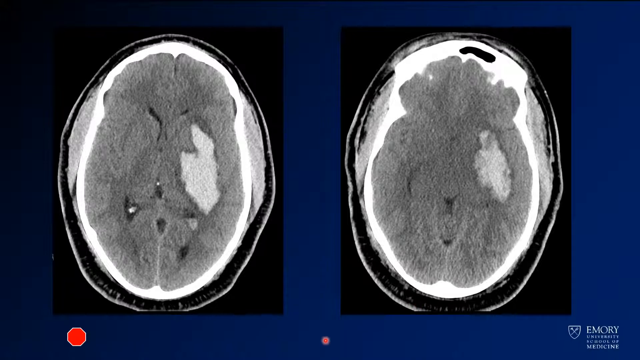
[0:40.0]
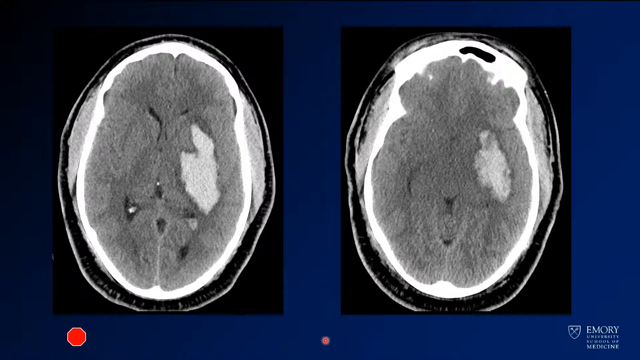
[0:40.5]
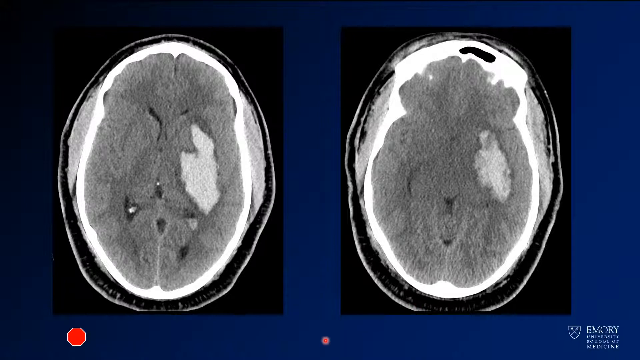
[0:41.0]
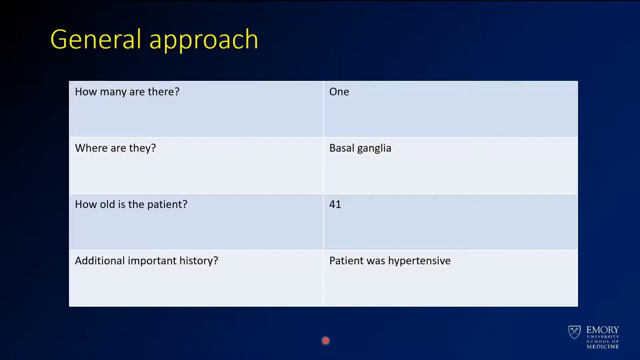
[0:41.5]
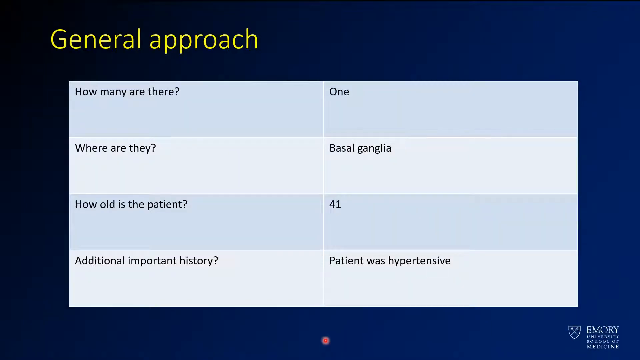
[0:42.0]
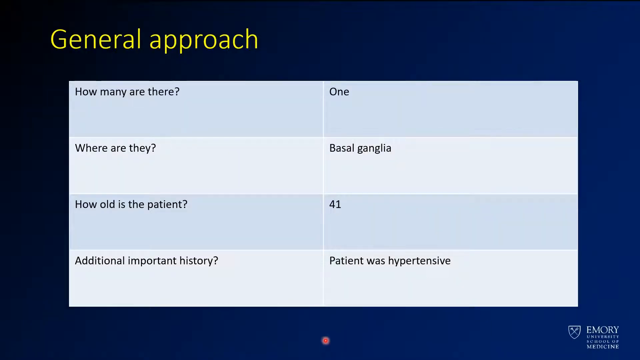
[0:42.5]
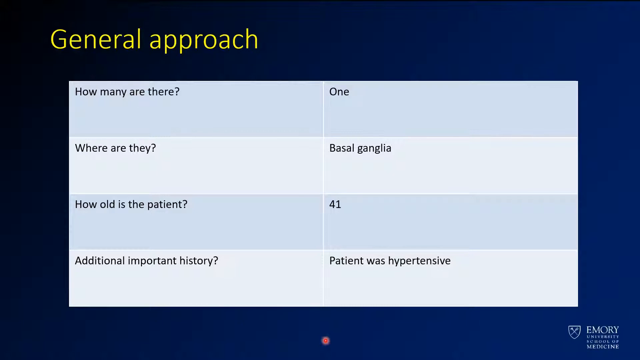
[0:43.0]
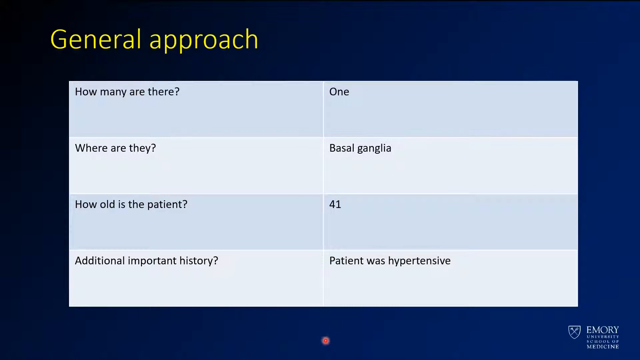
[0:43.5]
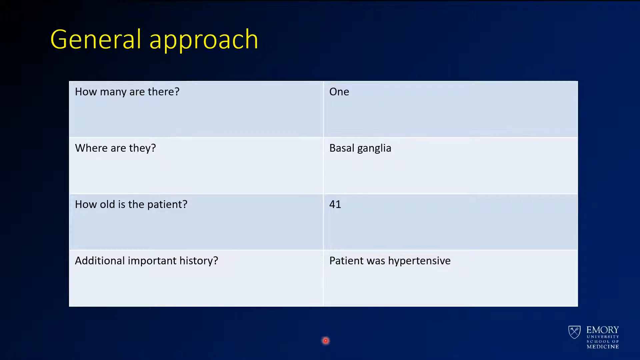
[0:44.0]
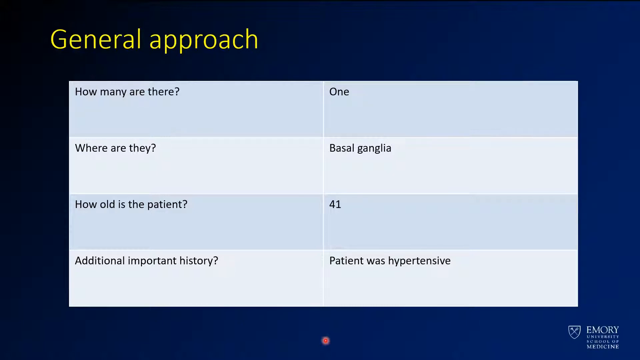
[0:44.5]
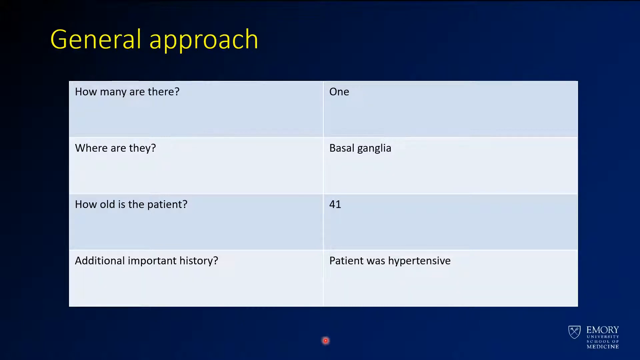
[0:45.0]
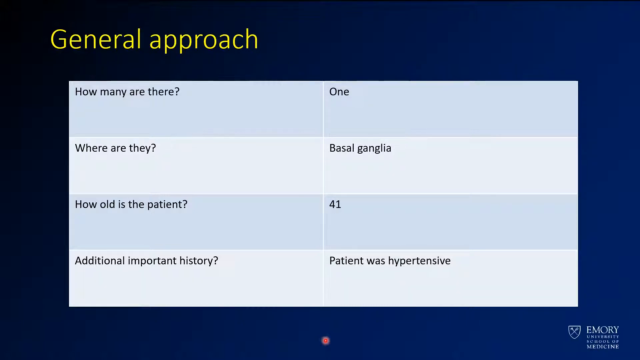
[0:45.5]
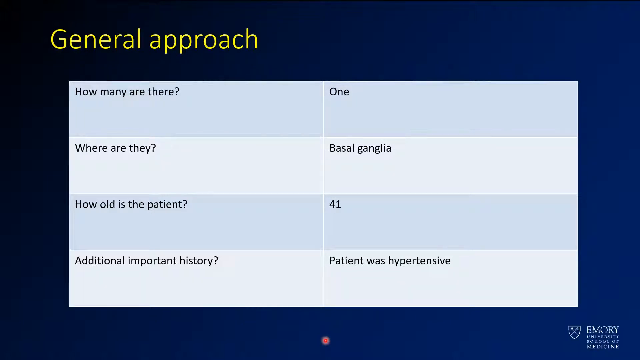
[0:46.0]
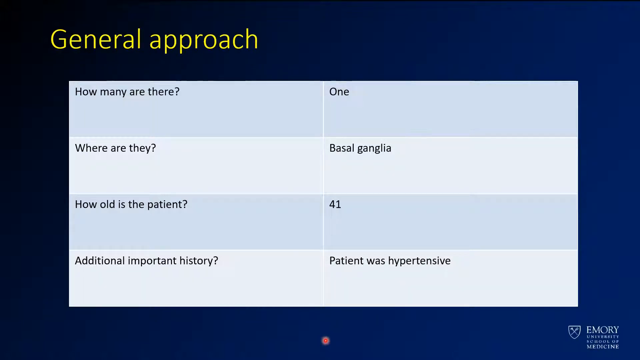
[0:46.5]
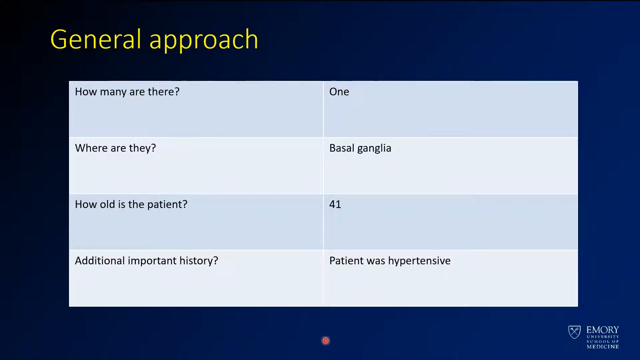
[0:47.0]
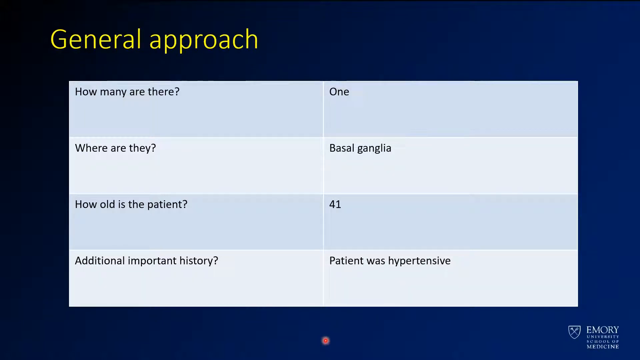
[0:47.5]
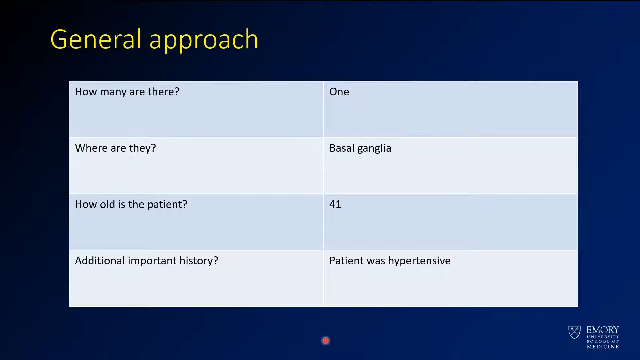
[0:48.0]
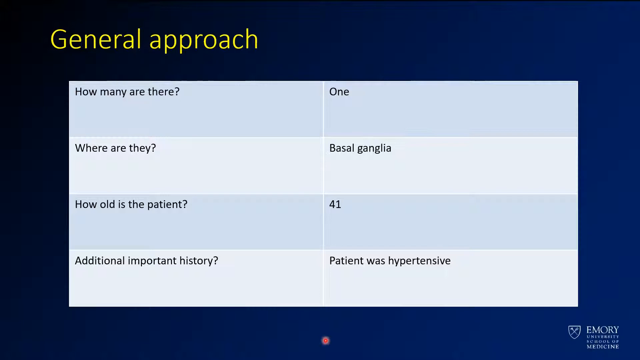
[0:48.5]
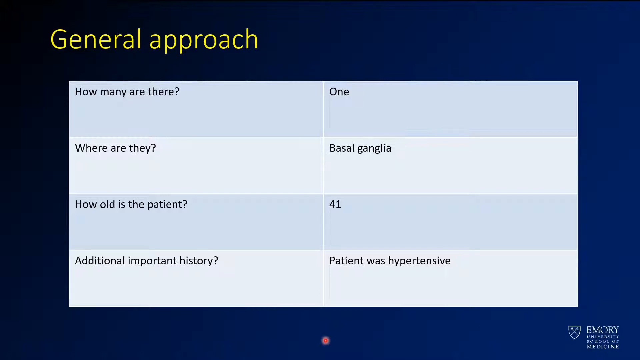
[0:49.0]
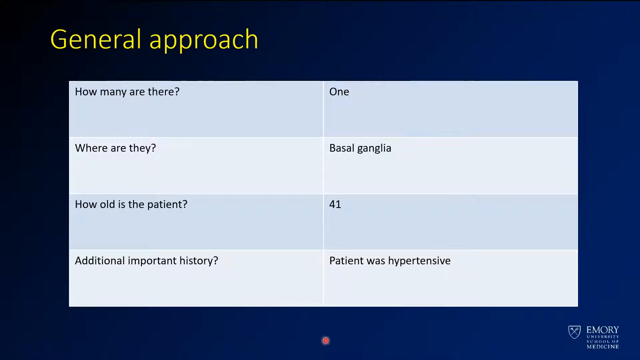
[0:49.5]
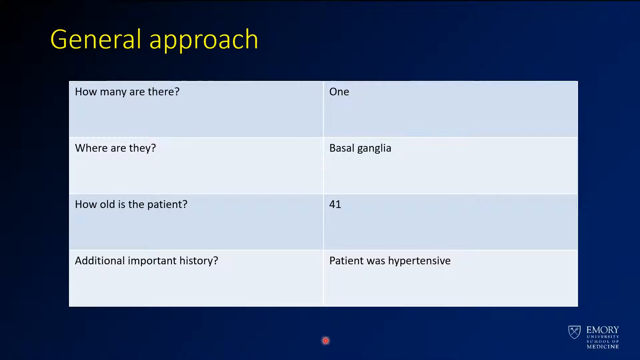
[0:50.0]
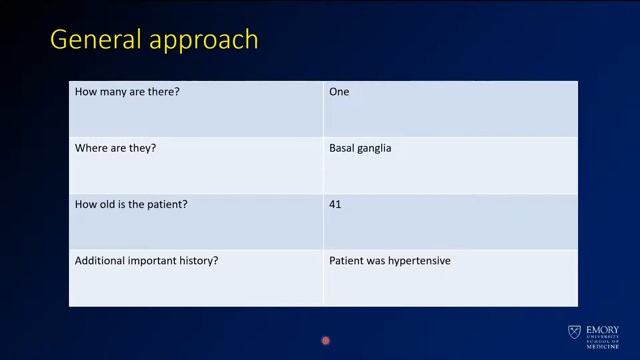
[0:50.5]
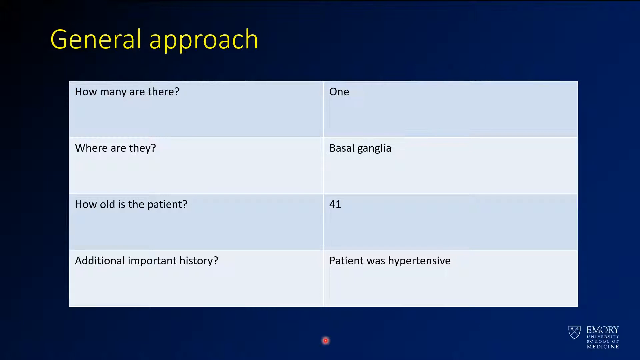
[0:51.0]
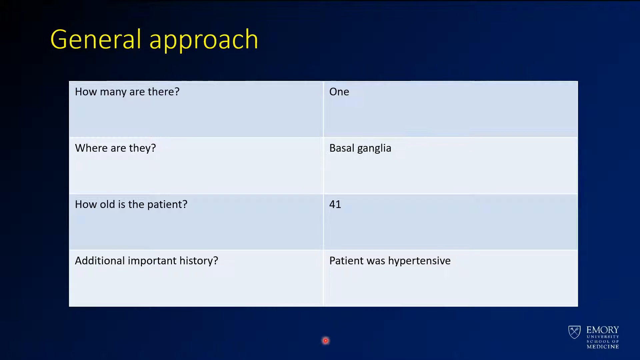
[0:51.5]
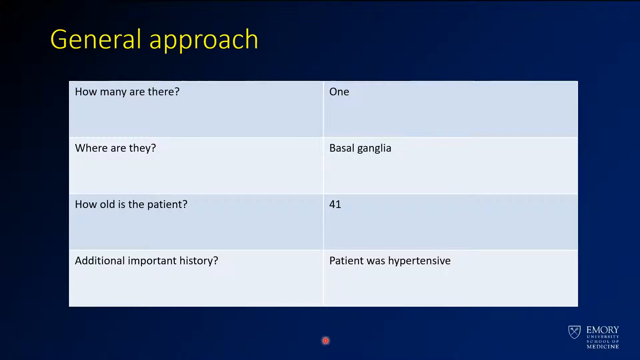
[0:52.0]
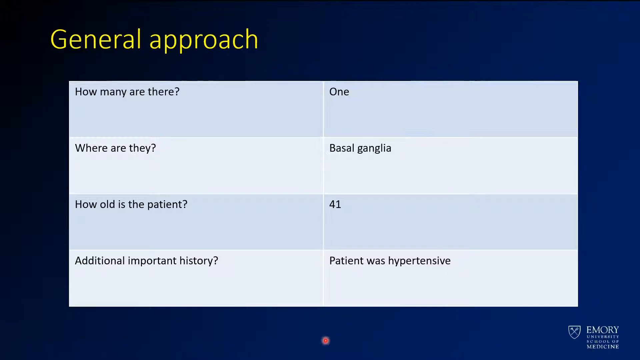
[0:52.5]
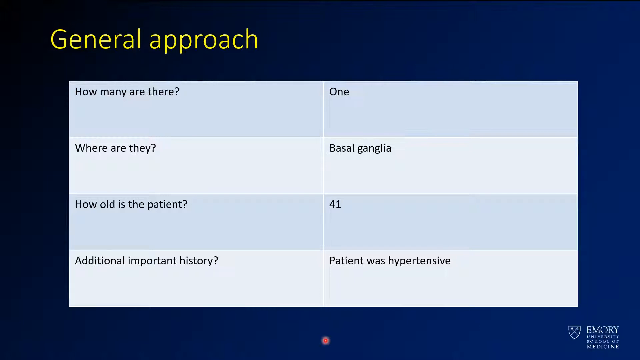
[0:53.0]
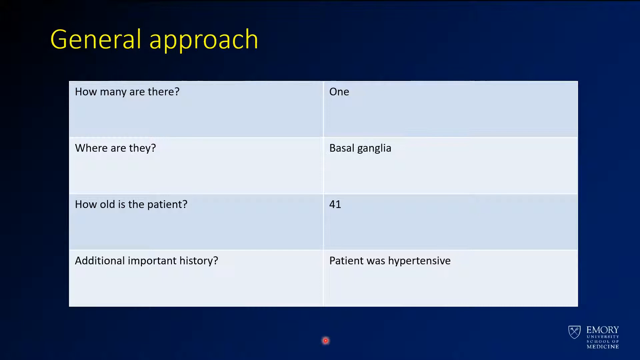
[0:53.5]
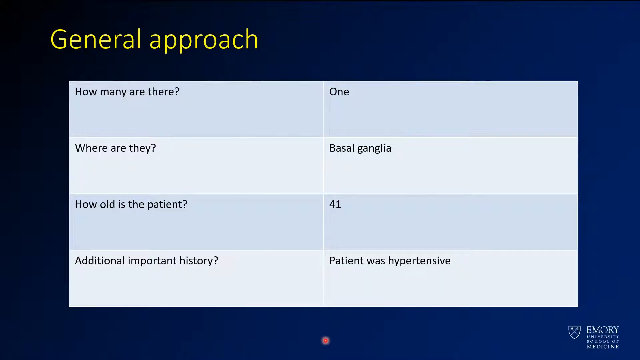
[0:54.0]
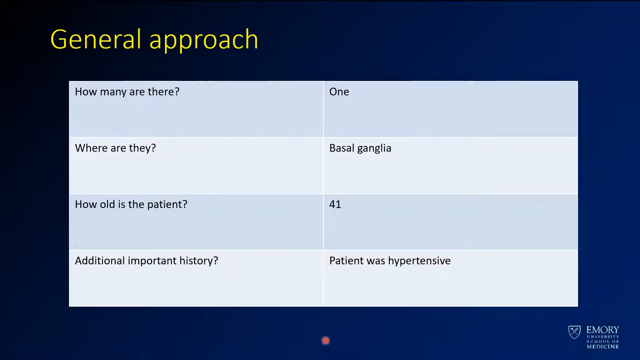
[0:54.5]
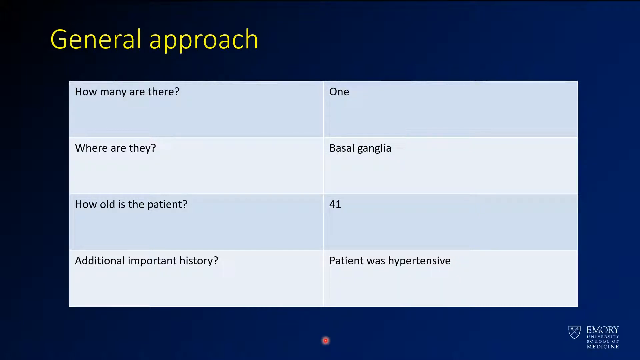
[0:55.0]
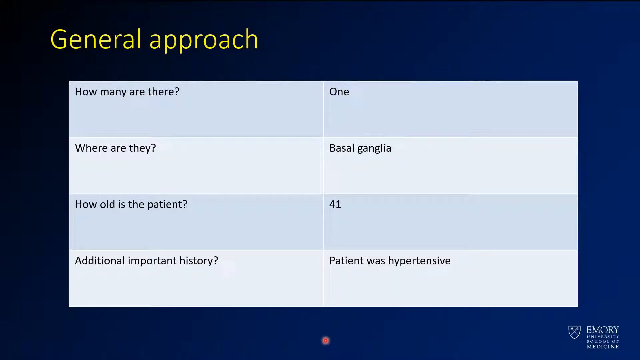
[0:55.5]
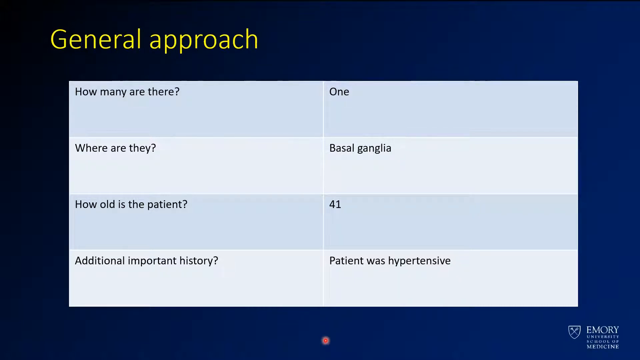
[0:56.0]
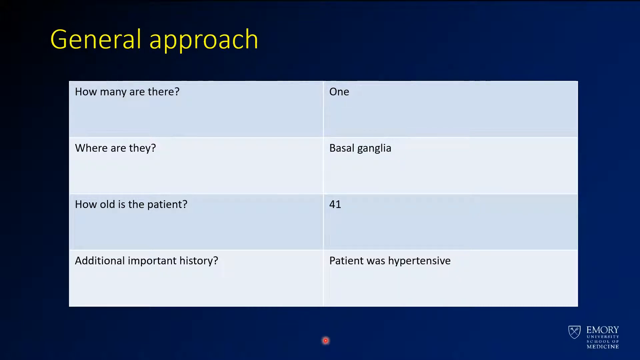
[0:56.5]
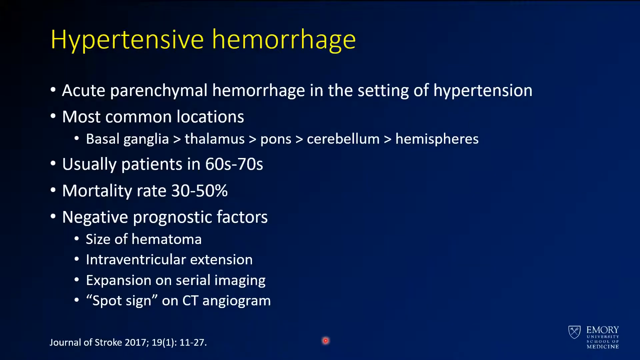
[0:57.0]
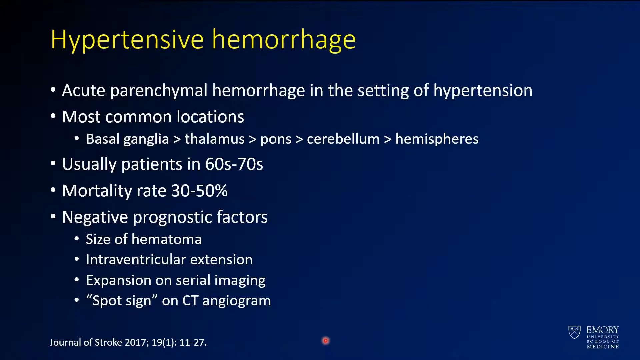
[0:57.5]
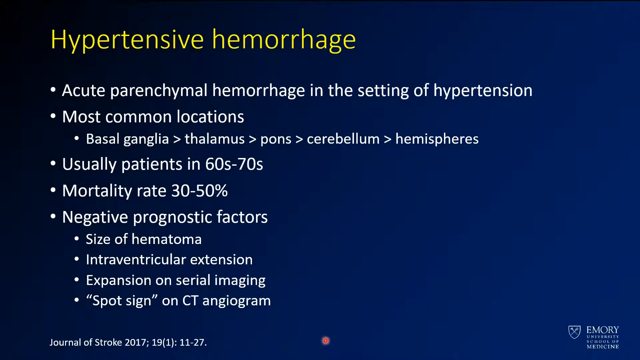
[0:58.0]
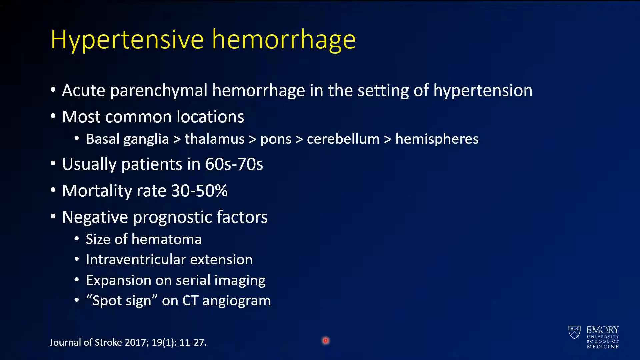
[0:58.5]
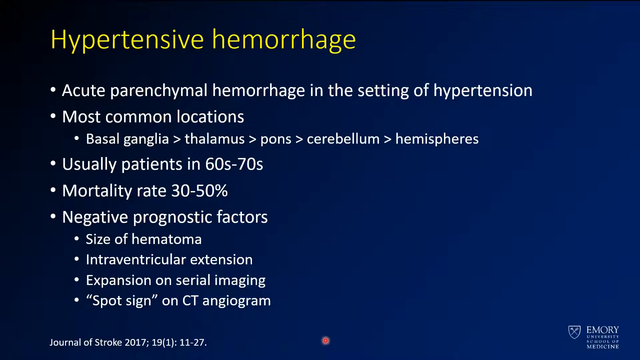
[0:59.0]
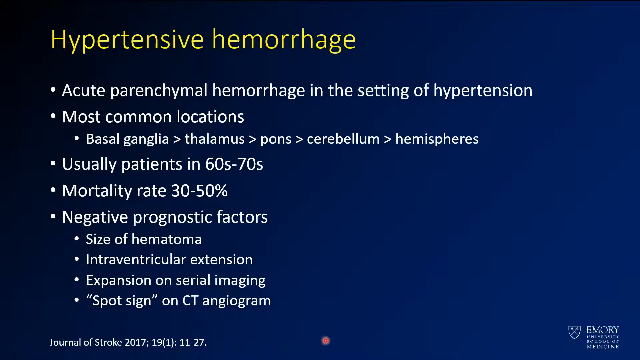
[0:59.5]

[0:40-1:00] The CT slices are shown against a dark black background. Next comes a light blue background with a table on it; the table's background is in alternating horizontal color stripes. The table lists how many there are (one), where they are (basal ganglia), how old the patient is (41), and additional important history (the patient was hypertensive). The next content covers hypertensive hemorrhage, listing the most common locations for the hemorrhage, that it occurs in the setting of hypertension, that patients are usually in their 60s to 70s, that the mortality rate is 30 to 50 percent, and negative prognostic factors including size of hematoma, intraventricular extension, expansion on serial imaging, and some other things.